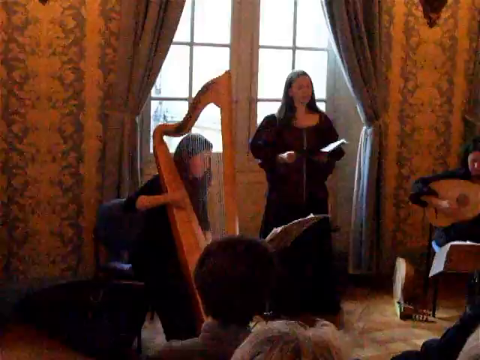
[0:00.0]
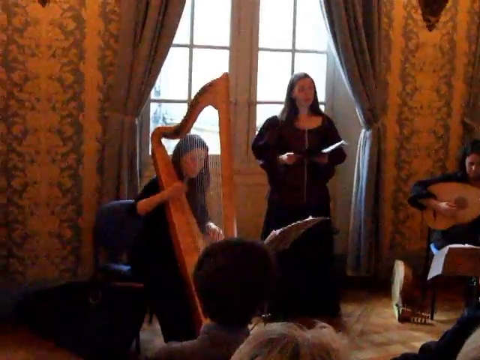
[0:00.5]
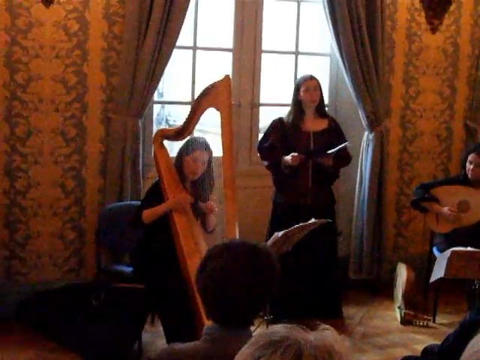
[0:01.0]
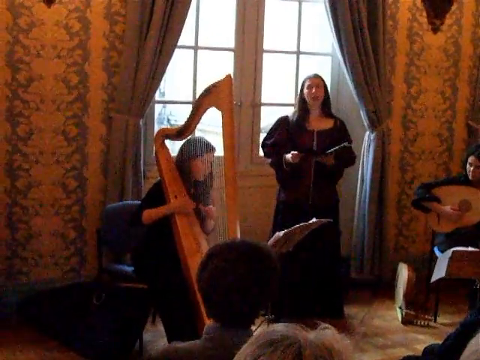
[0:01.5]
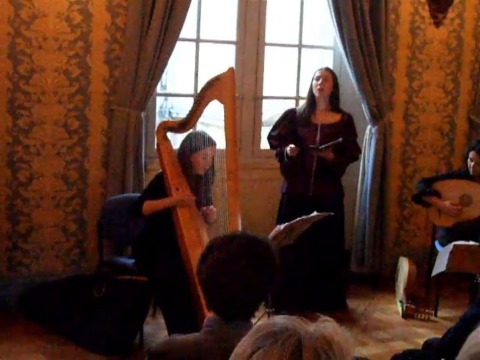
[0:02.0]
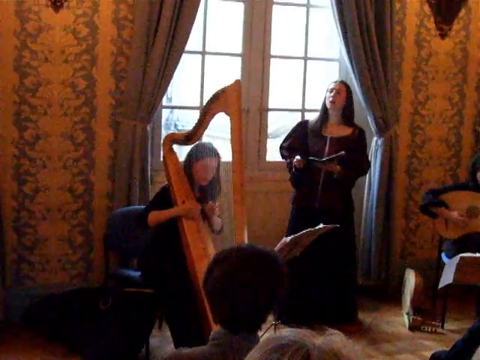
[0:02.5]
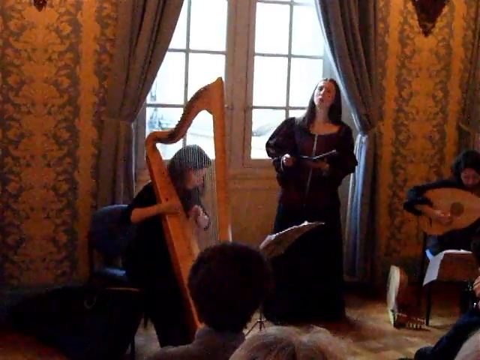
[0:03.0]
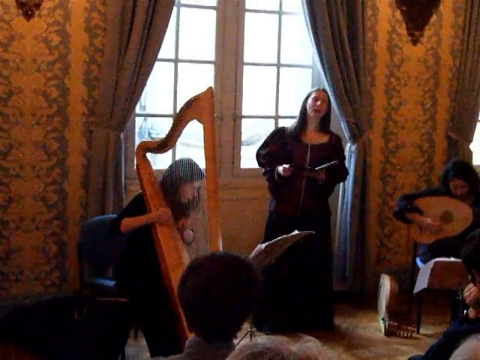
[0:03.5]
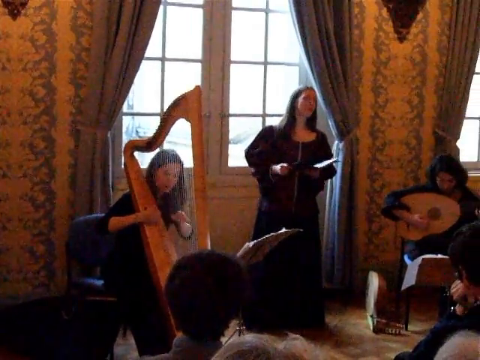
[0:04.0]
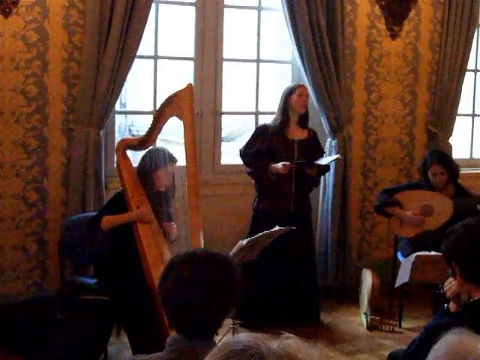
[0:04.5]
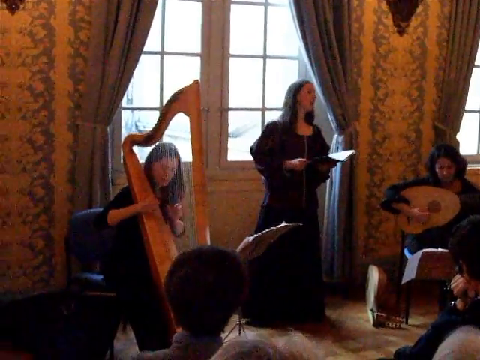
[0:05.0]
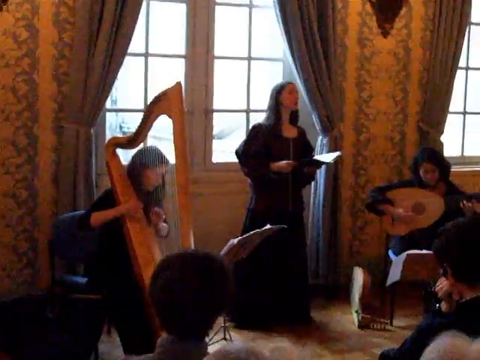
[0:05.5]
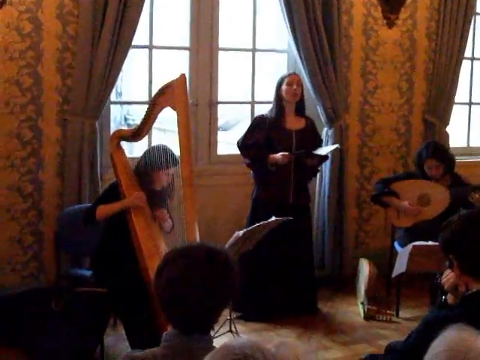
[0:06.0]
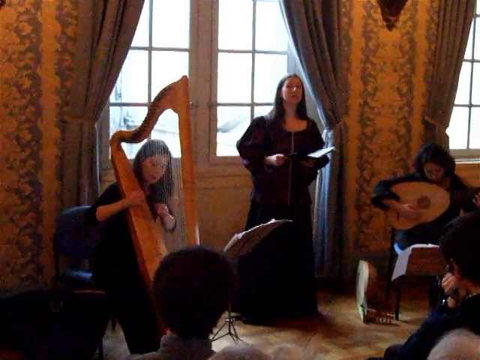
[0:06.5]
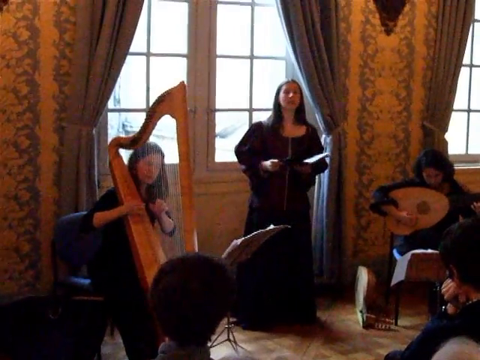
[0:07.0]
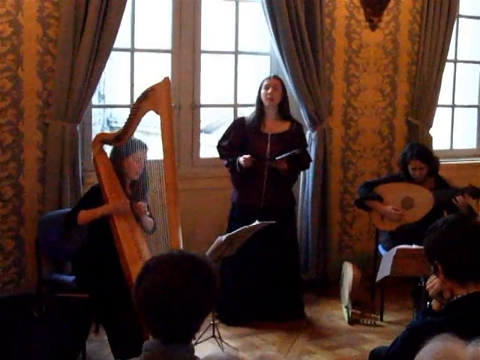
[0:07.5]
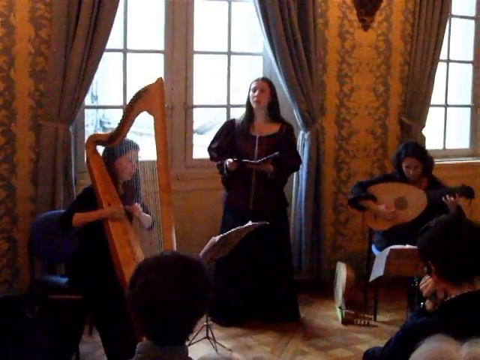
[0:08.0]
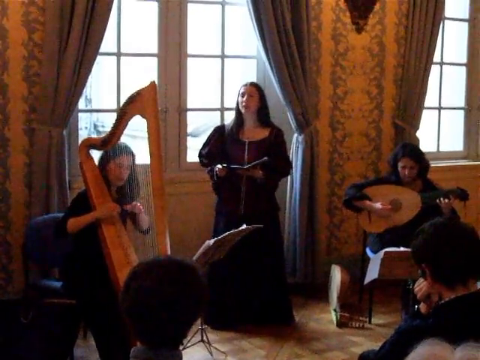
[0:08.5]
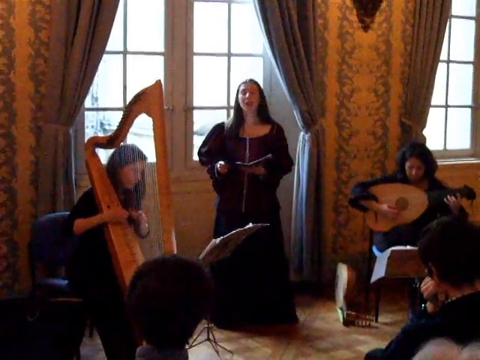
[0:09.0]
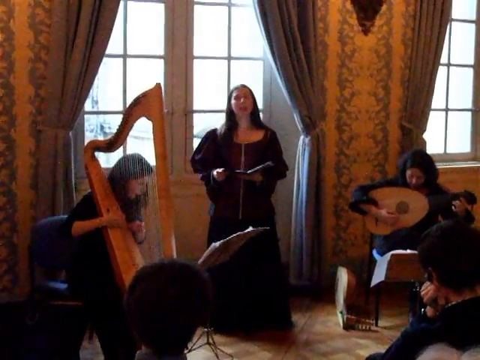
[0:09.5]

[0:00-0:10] A musical performance is shown in a setup that looks rather dated, and the video footage is kind of grainy. The performers wear long, almost robe- or shawl-style dresses in a heavy purple fabric. The women have shoulder-length brown hair. The one who is standing holds a booklet in front of her and sings, with a window behind her. Sitting to her side is a woman playing a harp, and sitting on her other side is what appears to be a person playing a lute. The room has a goldish-colored, wallpaper-looking textured wall that gives the performance a kind of dated, retro look.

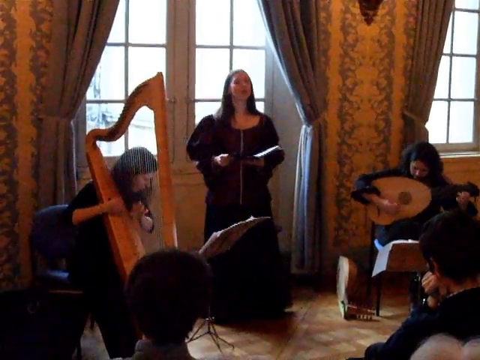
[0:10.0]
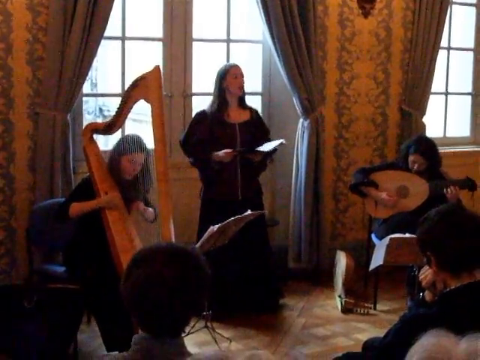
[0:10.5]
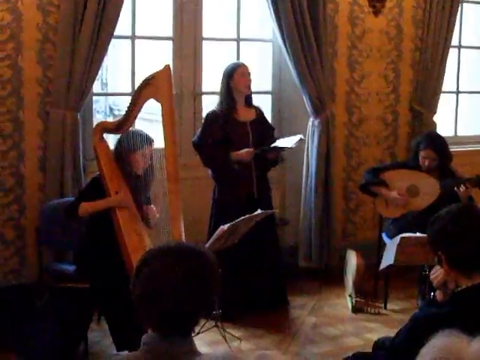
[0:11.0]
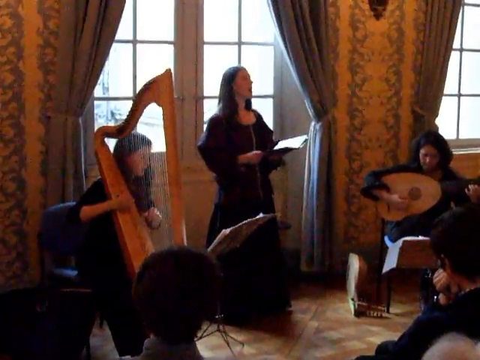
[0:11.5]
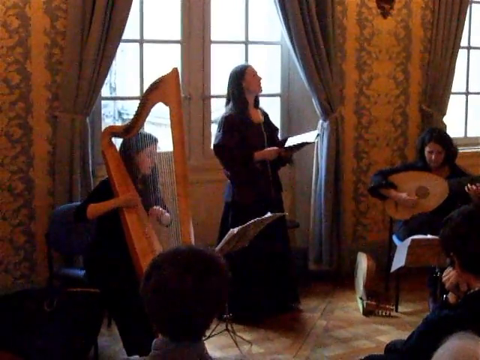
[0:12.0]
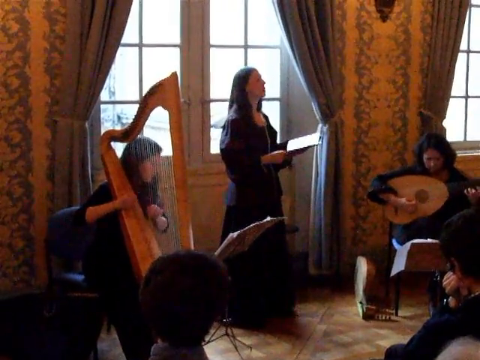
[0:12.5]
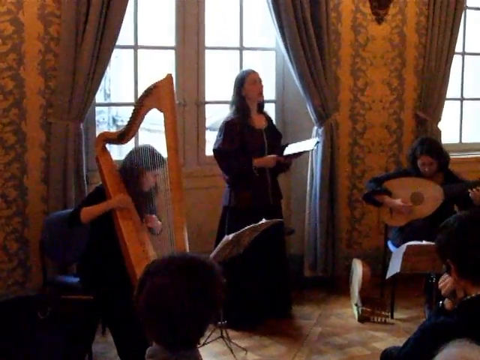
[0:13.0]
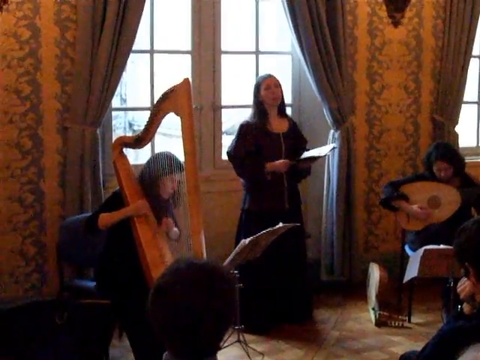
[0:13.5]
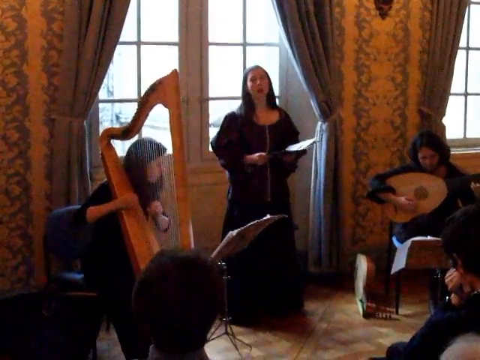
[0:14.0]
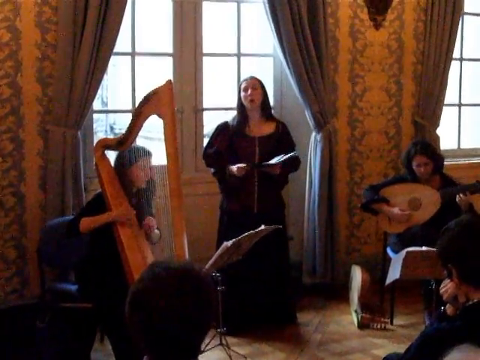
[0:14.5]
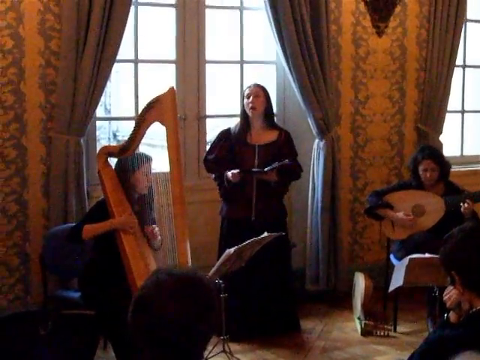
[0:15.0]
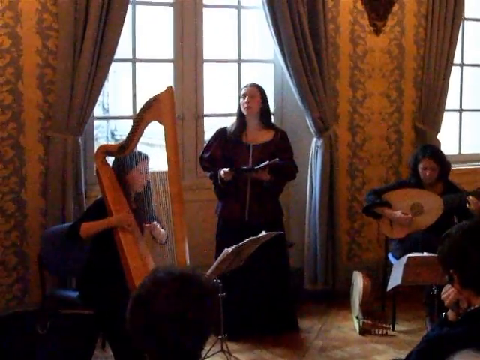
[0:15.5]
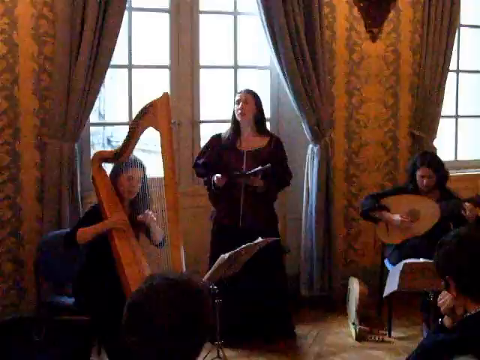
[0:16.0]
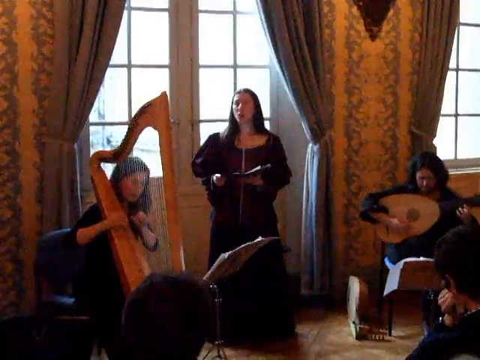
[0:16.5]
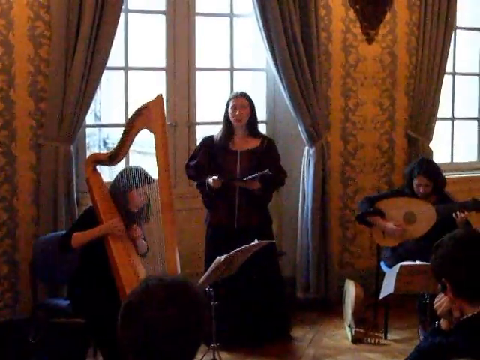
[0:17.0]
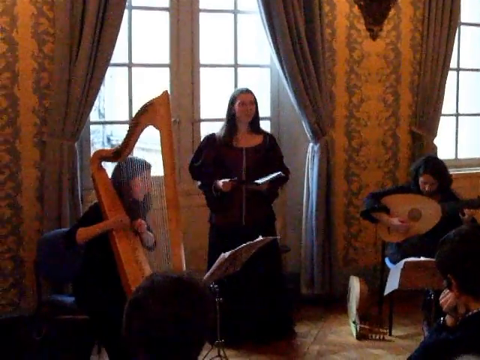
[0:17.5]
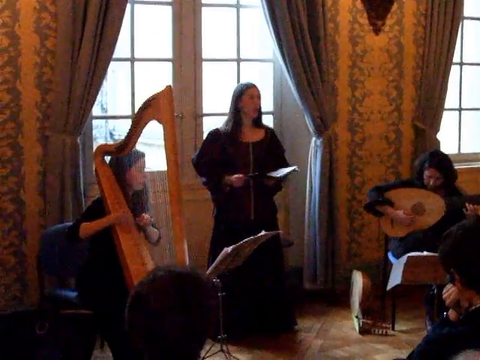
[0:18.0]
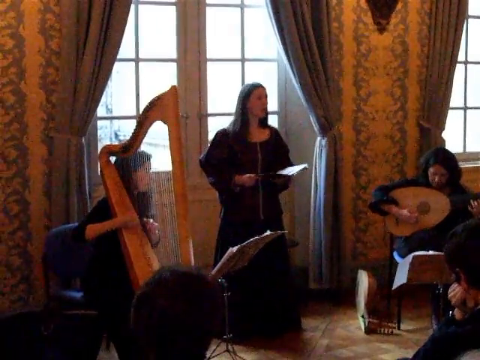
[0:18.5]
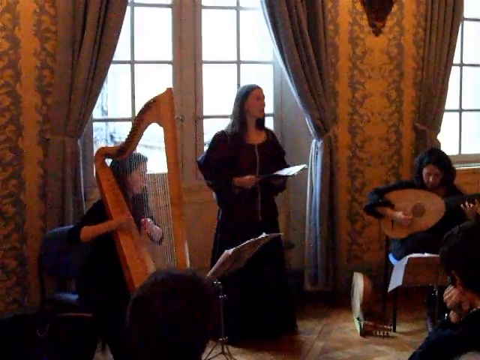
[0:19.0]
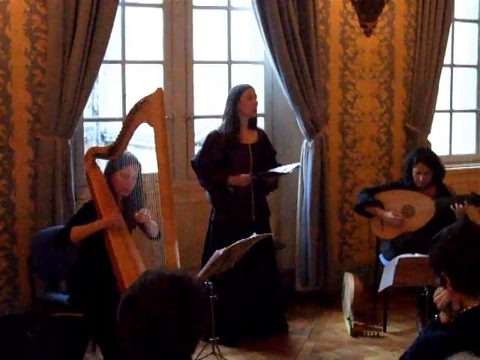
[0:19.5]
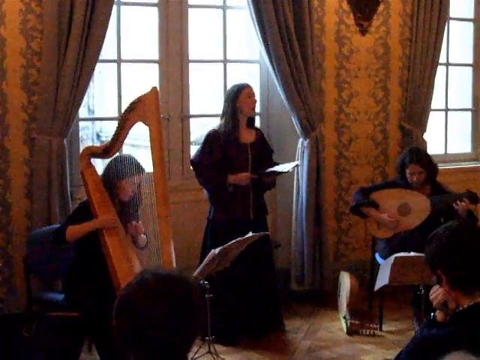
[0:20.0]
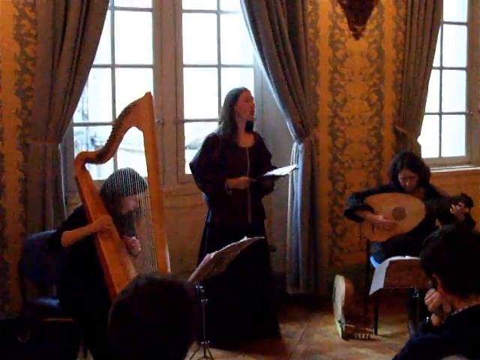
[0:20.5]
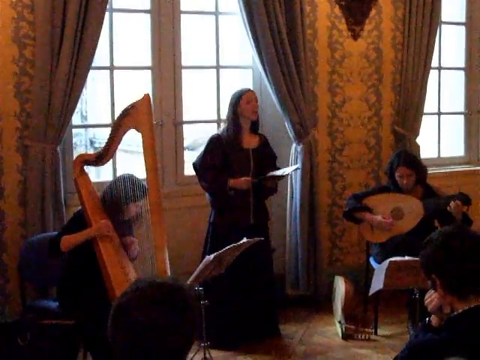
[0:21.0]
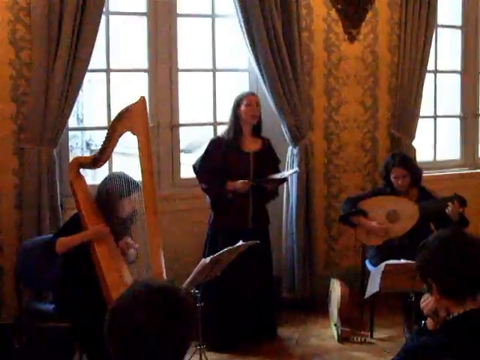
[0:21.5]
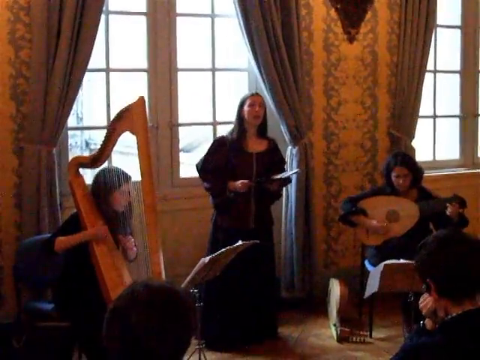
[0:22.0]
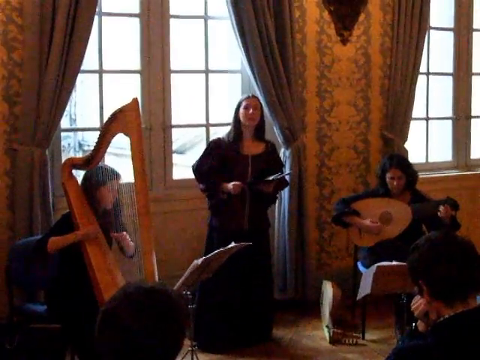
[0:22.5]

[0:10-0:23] In a musical performance, a woman wears a kind of puffy, long-sleeved purple dress that looks kind of like Renaissance-era clothing. She has long brown hair and stands in front of some windows that let sunlight in. Curtains are pulled back to the side, and the walls appear to have golden-green wallpaper. Next to her a woman plays a harp, and on her other side a woman appears to be playing a lute. People sit out in front of her to watch the performance; the backs of their heads are visible, showing that the performance is for a crowd.